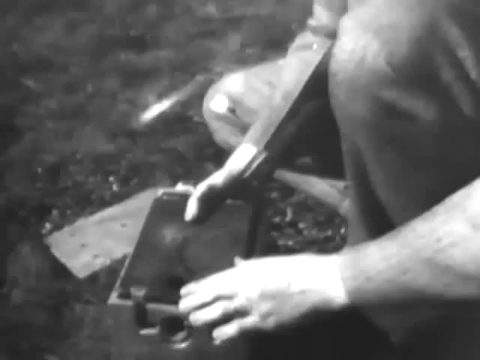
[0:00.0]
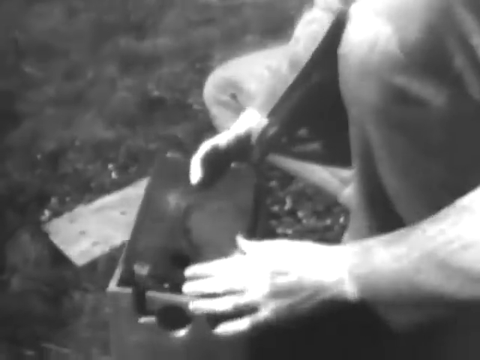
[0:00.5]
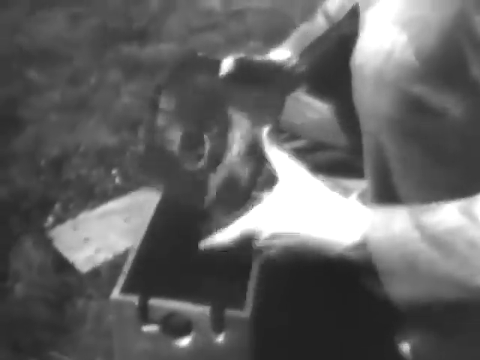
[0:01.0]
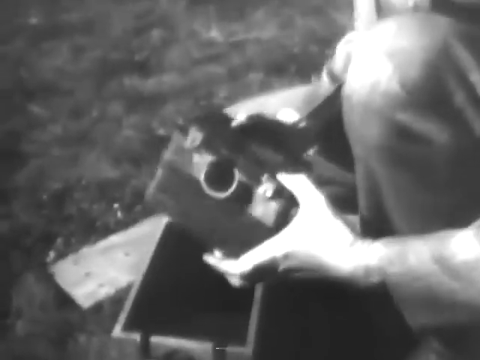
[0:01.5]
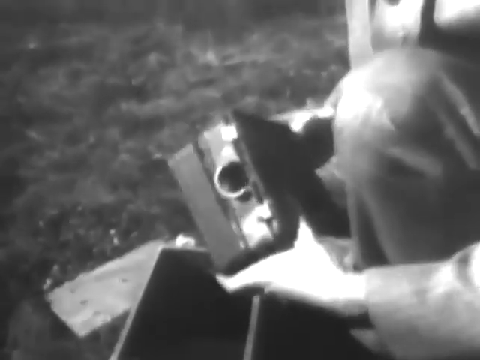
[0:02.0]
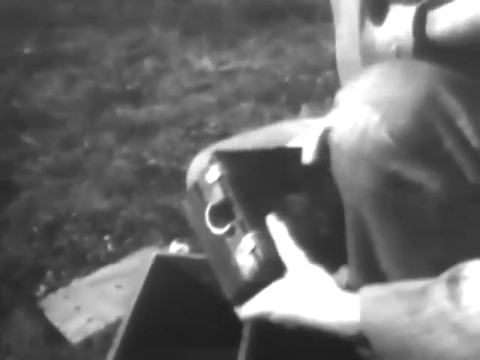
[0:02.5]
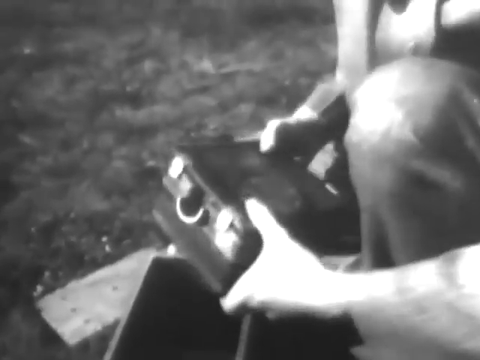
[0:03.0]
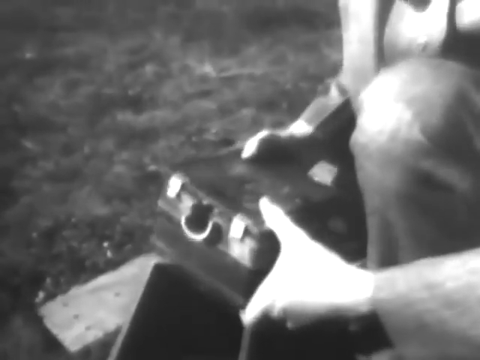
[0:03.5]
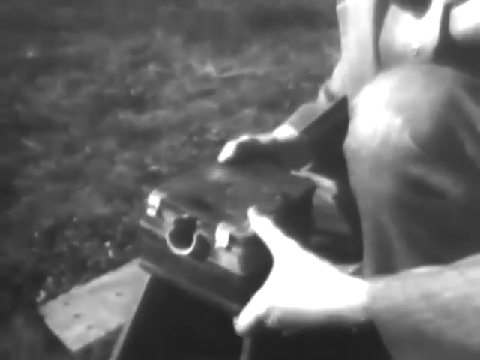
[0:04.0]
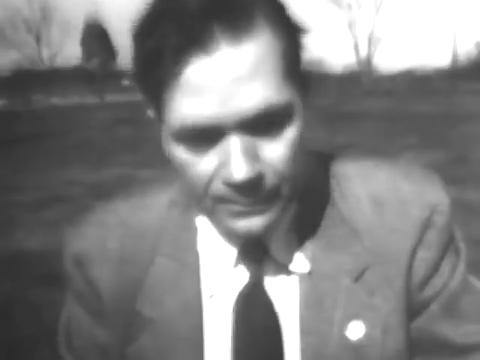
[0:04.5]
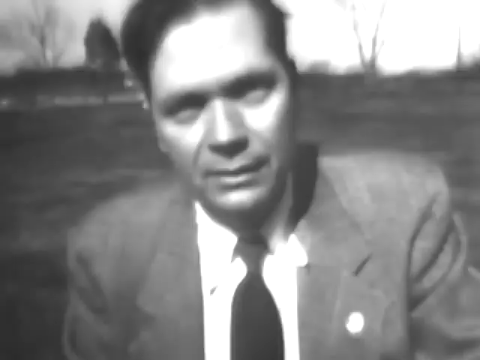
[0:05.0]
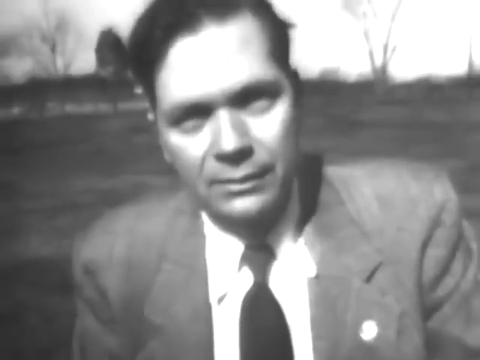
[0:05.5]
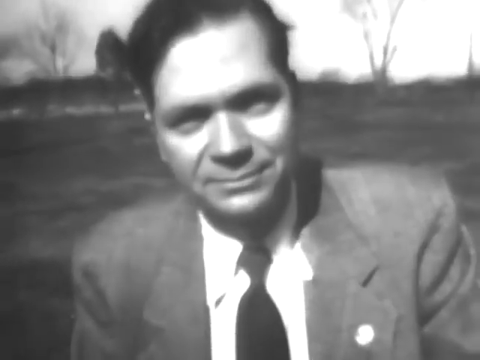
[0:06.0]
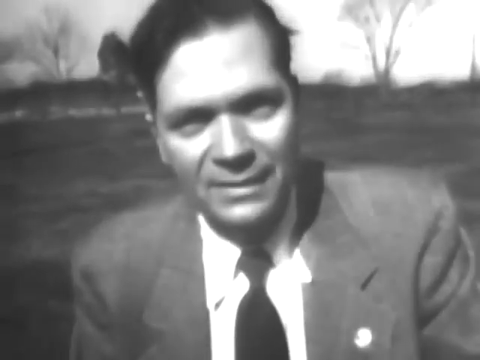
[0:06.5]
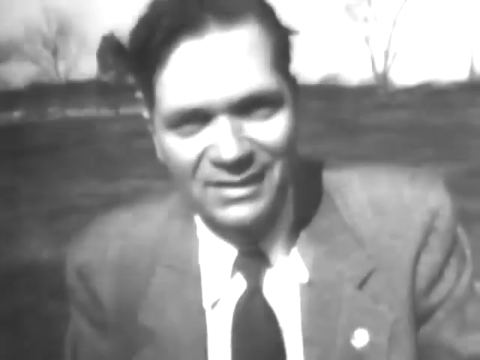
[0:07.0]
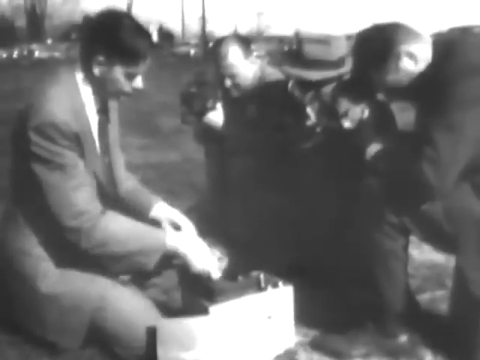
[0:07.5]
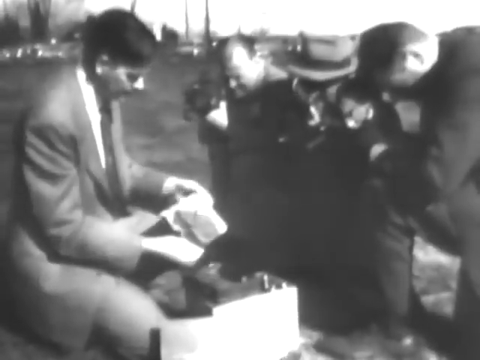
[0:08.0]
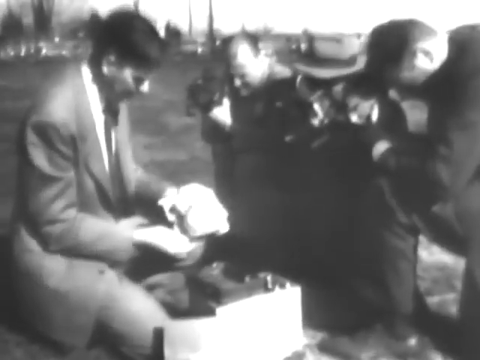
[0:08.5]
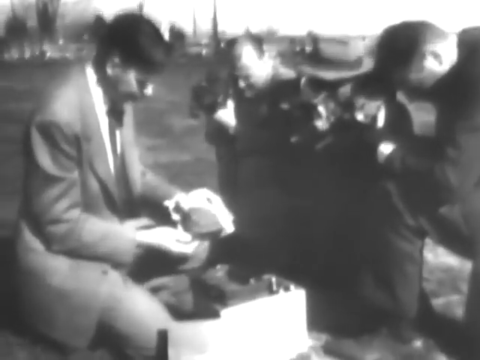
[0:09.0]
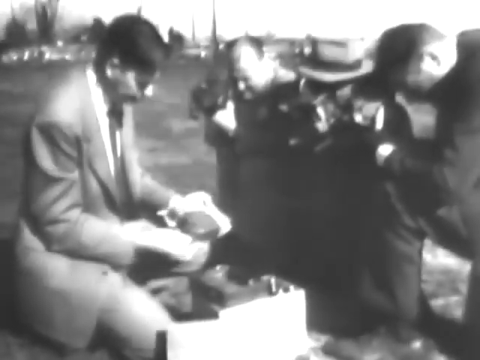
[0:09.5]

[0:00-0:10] In a black and white video, someone pulls something, apparently an old camera, out of a brown box or off the ground. A middle-aged man in a suit and tie is on the screen, taking something out of the box. There are a few trees in the background and a lot of open field, and some other people are taking a picture. It might be a time capsule situation, with the box possibly having been buried in the ground and rediscovered years later. He looks at the old camera that came out of the box.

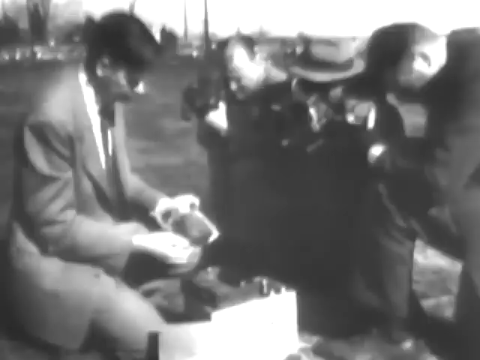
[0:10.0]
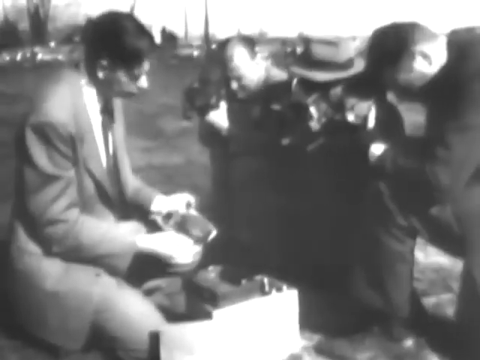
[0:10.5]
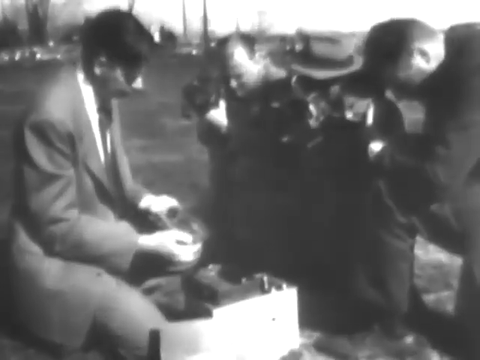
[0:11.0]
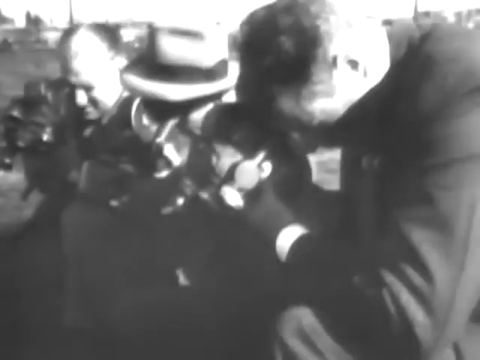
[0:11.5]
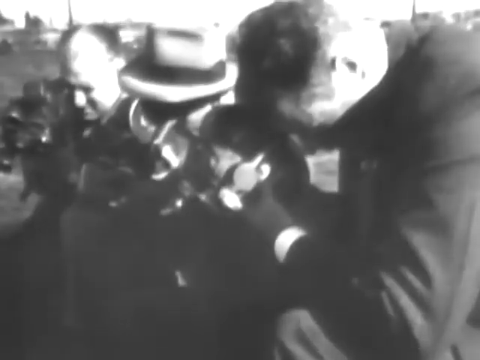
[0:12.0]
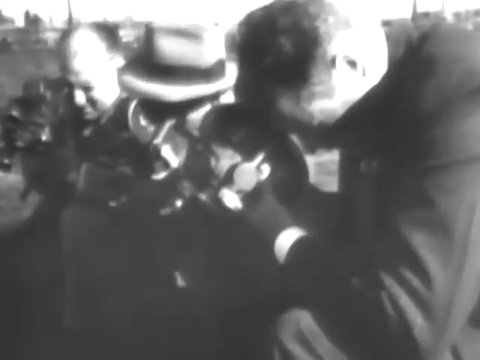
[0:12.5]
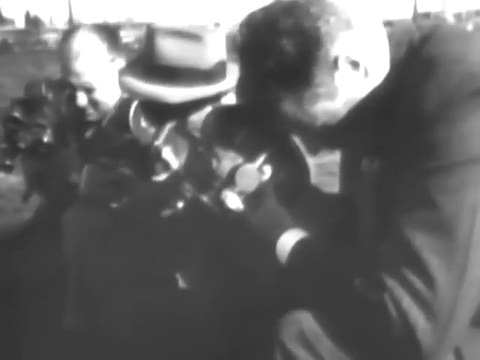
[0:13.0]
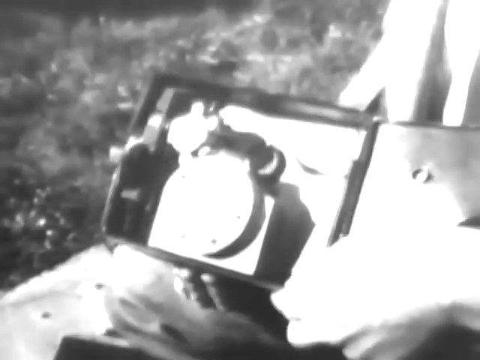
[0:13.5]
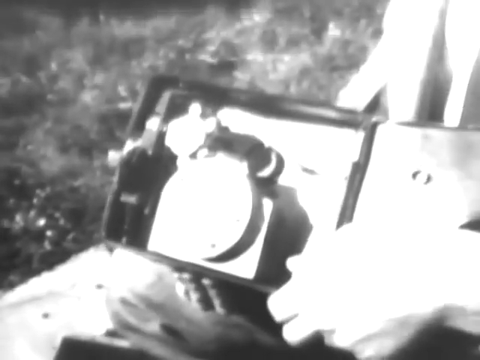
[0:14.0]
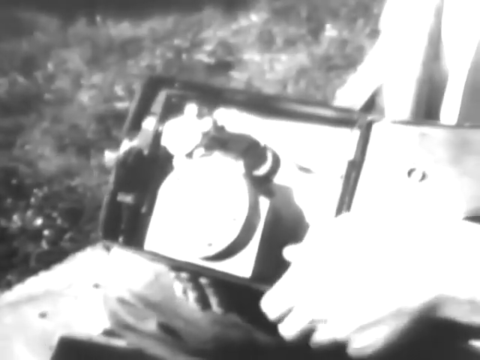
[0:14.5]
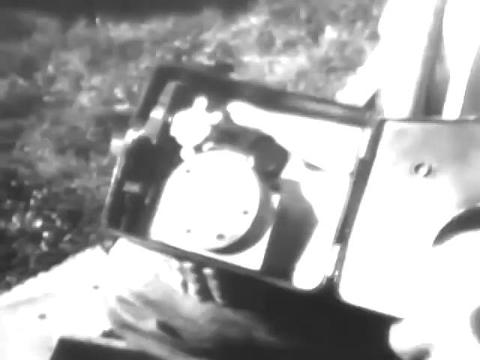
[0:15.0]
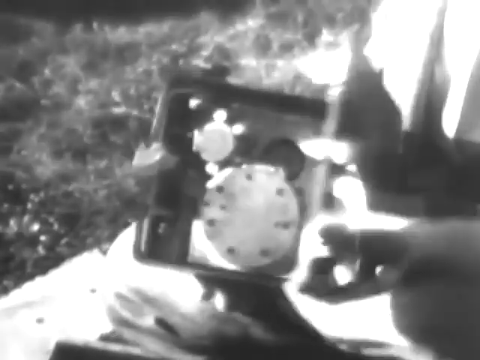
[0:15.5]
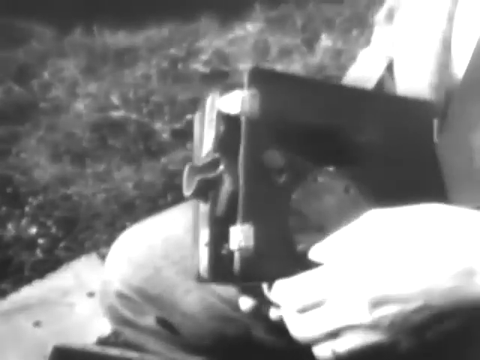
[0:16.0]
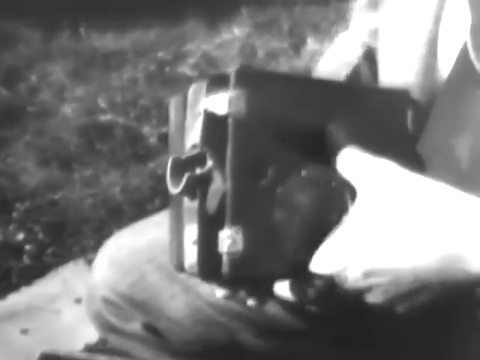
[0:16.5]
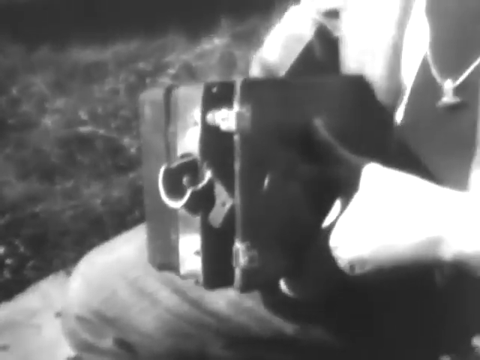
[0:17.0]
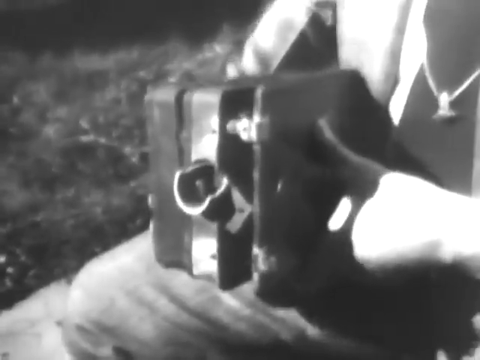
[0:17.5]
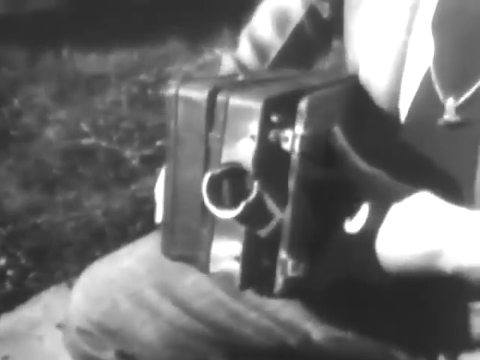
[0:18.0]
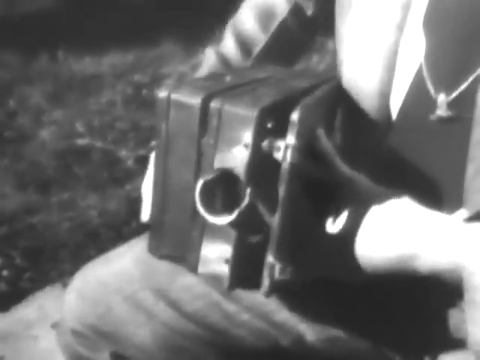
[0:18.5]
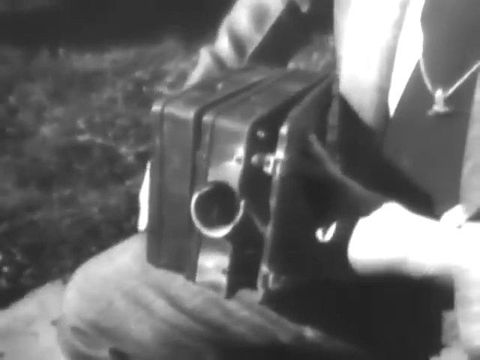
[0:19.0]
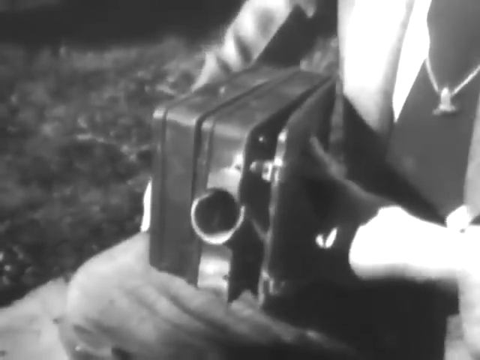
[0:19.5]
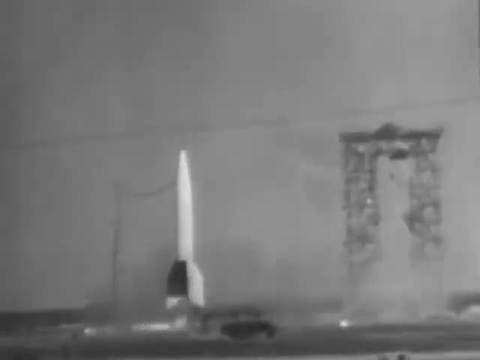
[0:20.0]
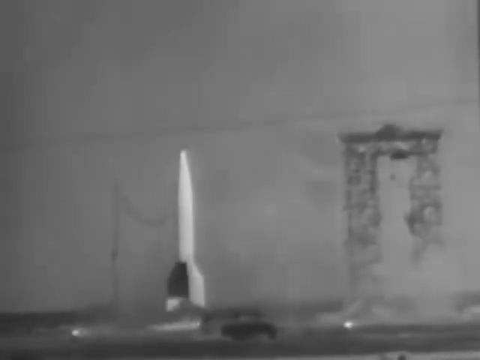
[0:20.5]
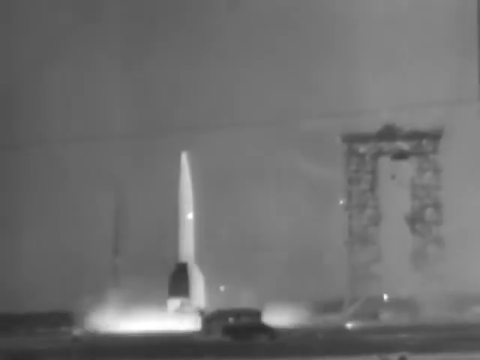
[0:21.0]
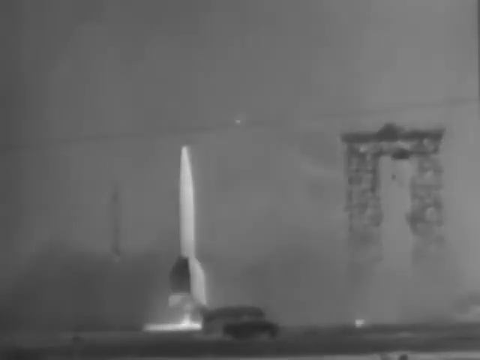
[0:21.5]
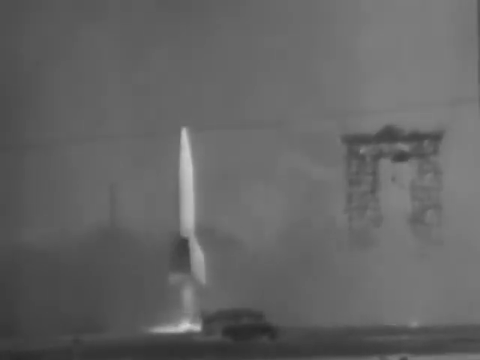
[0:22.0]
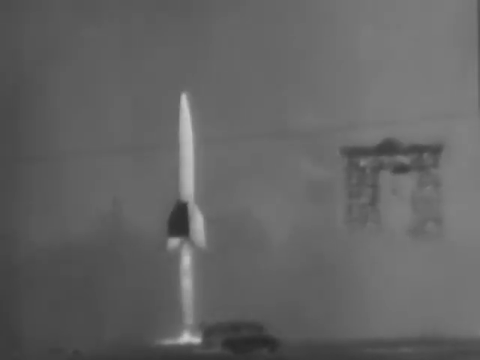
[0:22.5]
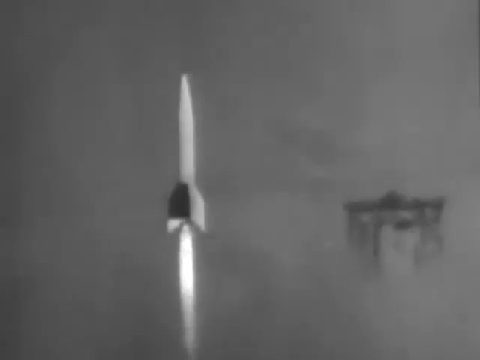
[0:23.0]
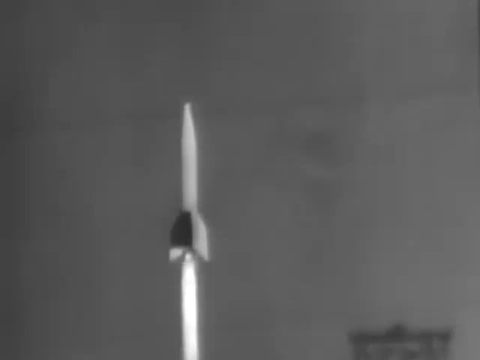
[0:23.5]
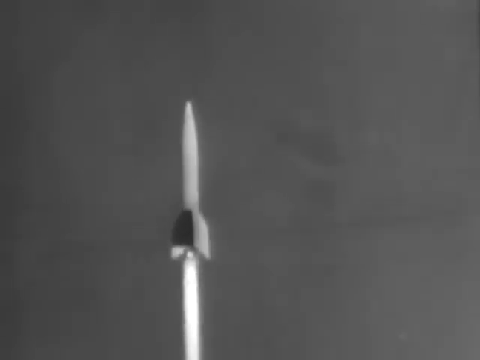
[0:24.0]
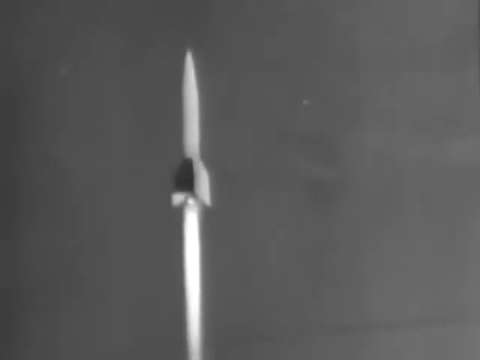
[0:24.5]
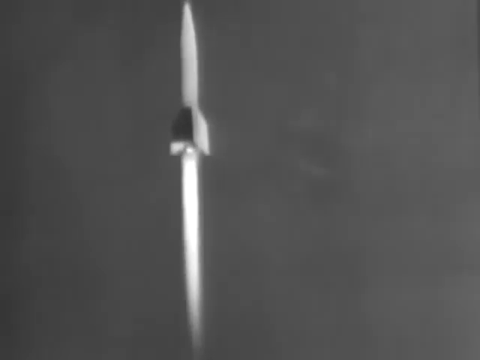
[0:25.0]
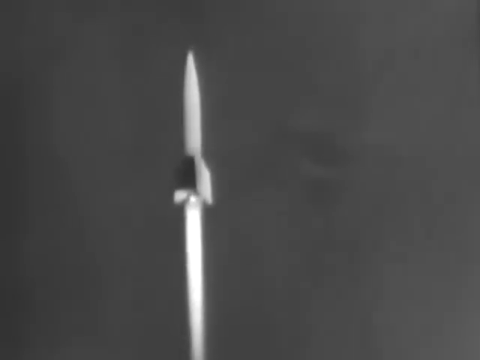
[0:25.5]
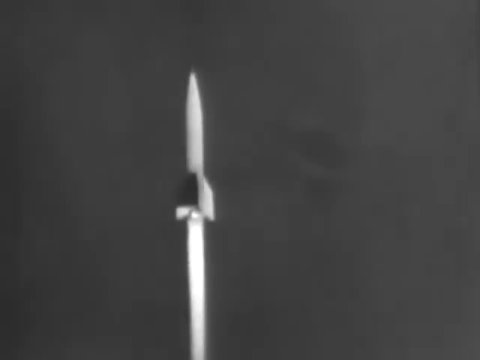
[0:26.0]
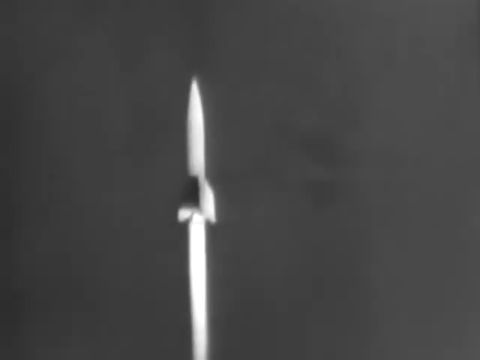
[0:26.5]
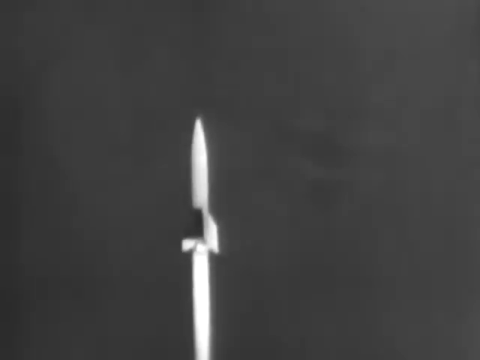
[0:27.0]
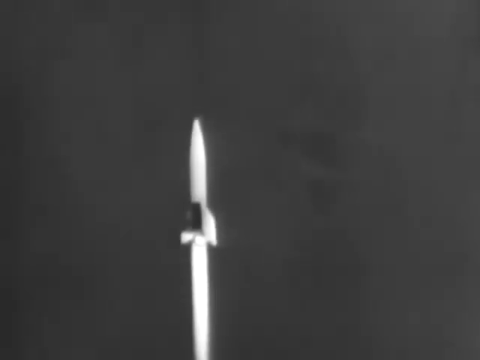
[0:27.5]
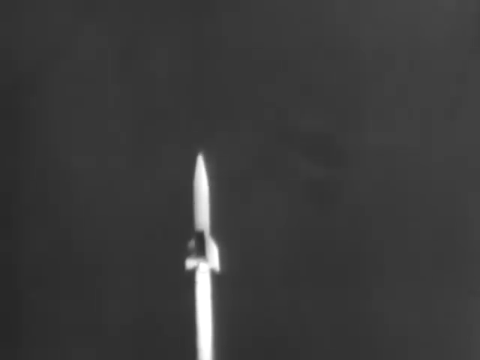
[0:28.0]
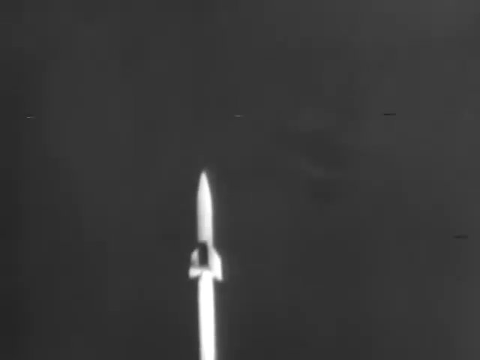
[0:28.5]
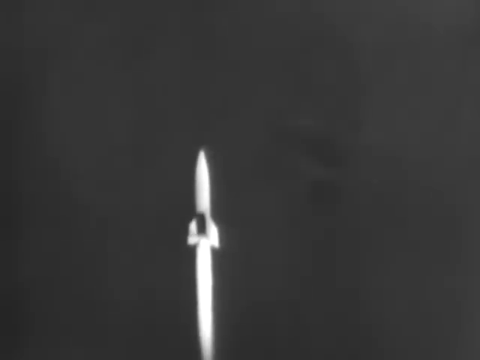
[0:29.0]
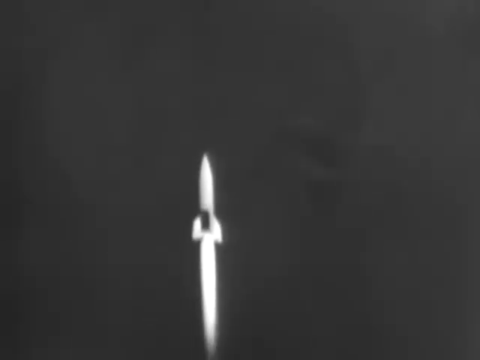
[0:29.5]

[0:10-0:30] A Caucasian man in a suit and tie has just taken what looks like an old camera out of a box he has dug up from the ground. Three people bend down, taking pictures of him as he takes the camera out of the box. It seems to be a time capsule situation, with the box apparently buried for decades. He opens up the camera, and then footage shows a rocket ship about to take off. It goes up into the sky with its thrusters and flame visible, climbing higher and higher.